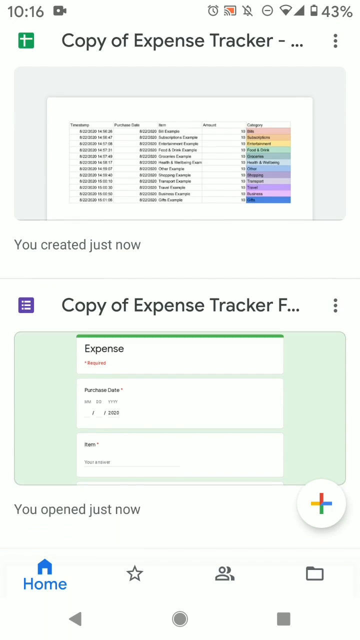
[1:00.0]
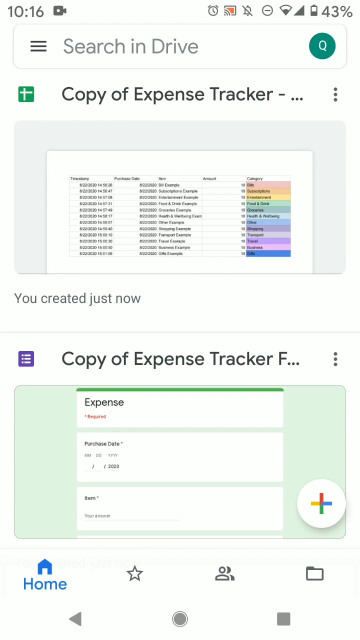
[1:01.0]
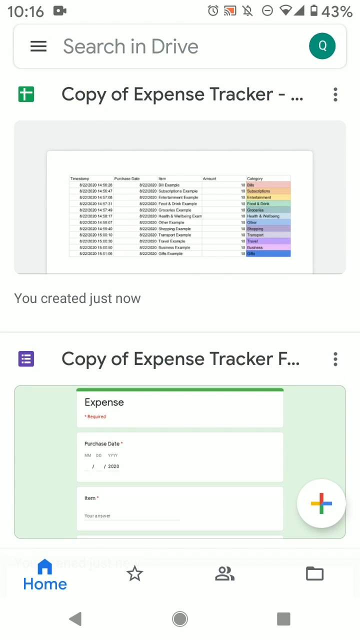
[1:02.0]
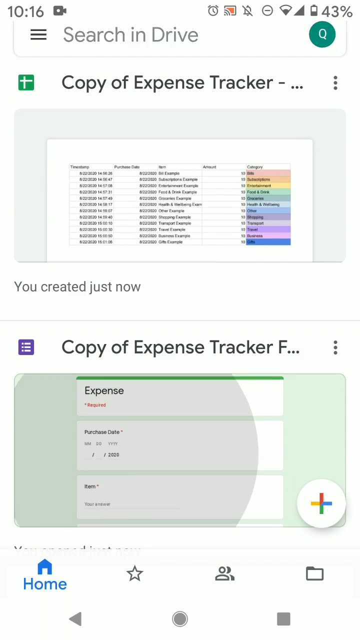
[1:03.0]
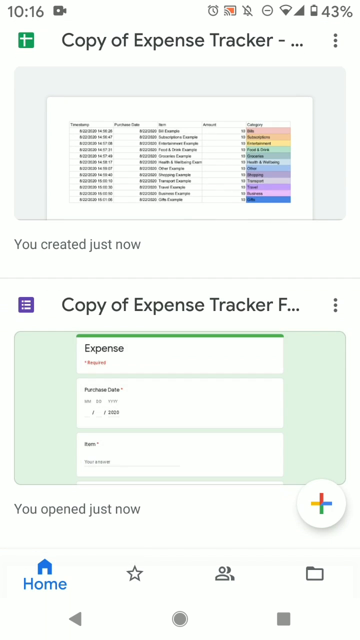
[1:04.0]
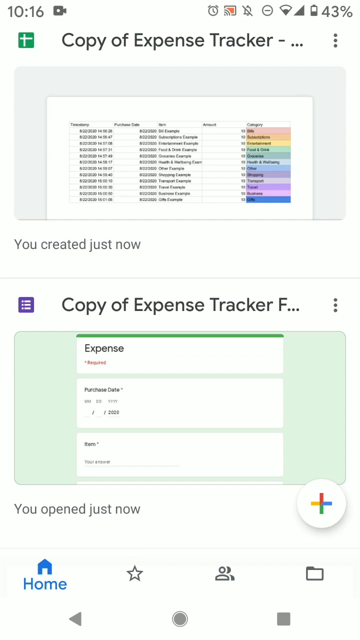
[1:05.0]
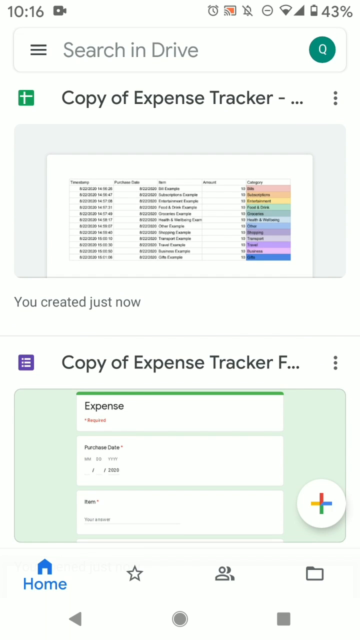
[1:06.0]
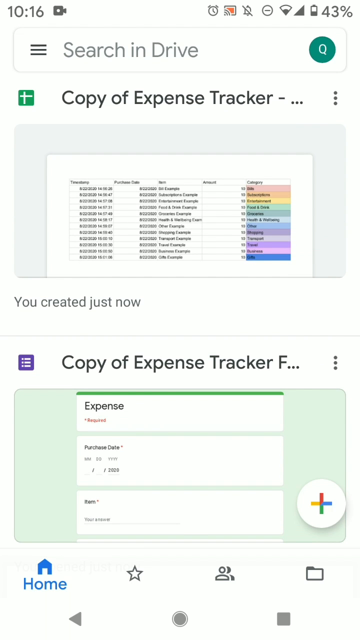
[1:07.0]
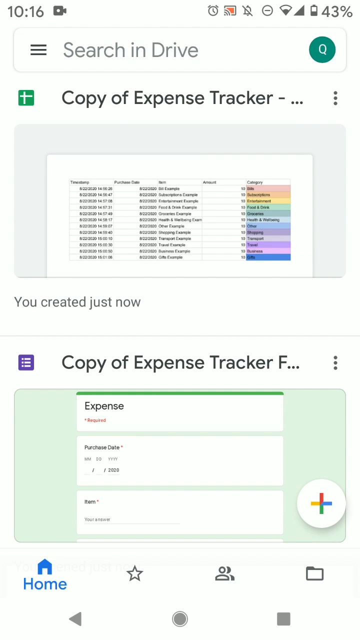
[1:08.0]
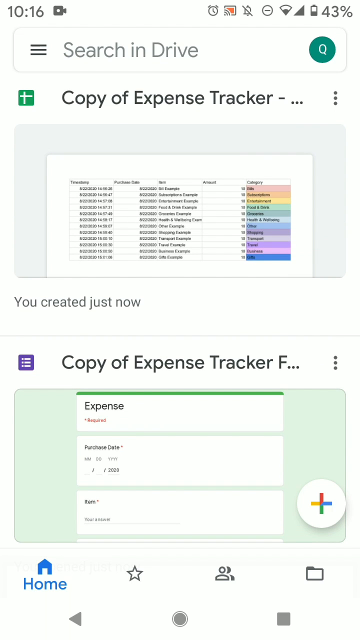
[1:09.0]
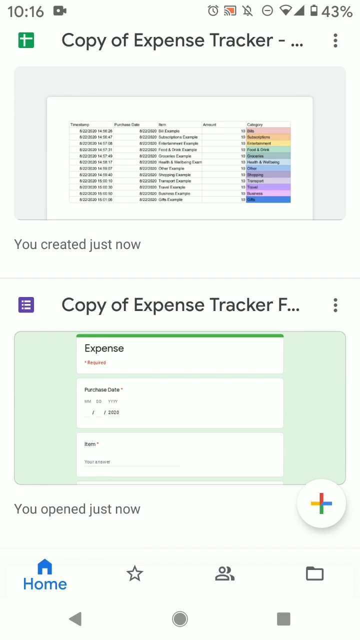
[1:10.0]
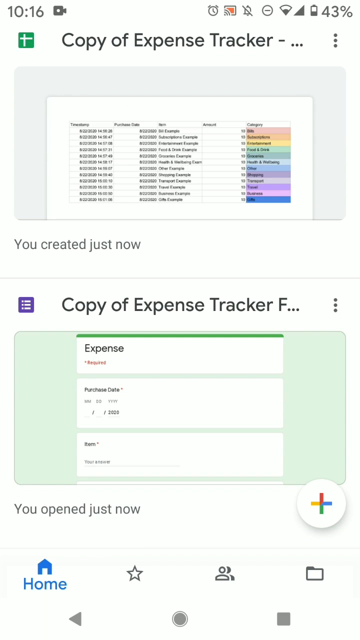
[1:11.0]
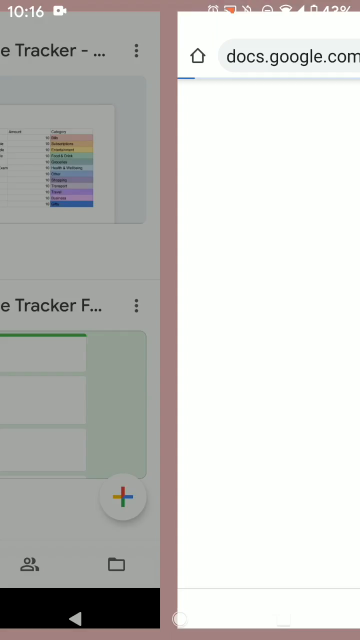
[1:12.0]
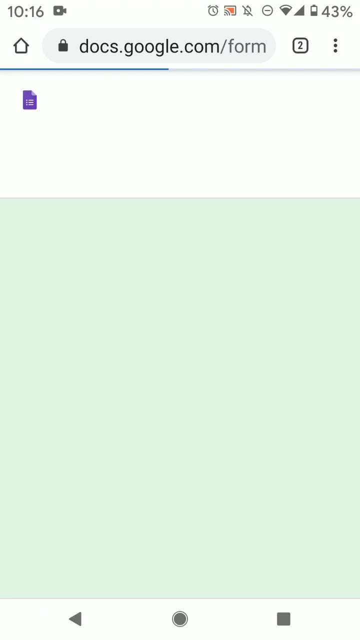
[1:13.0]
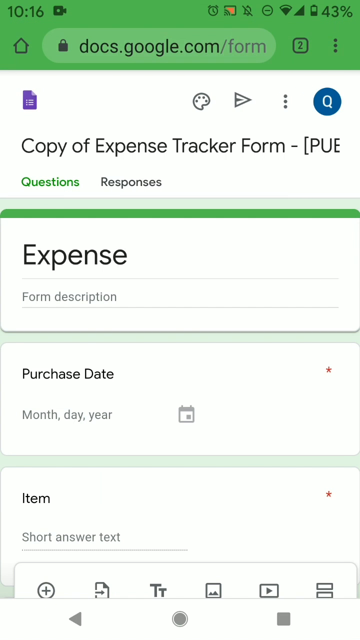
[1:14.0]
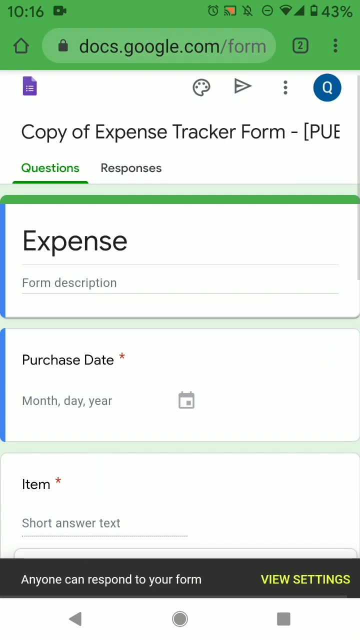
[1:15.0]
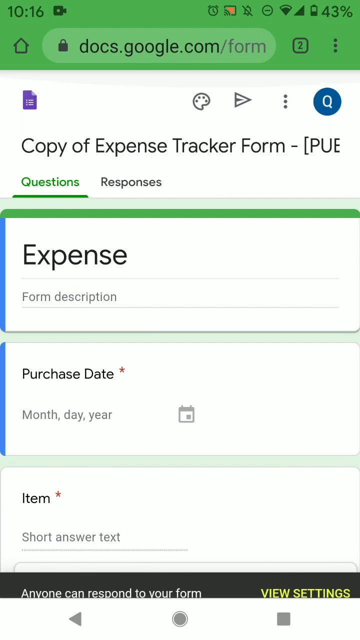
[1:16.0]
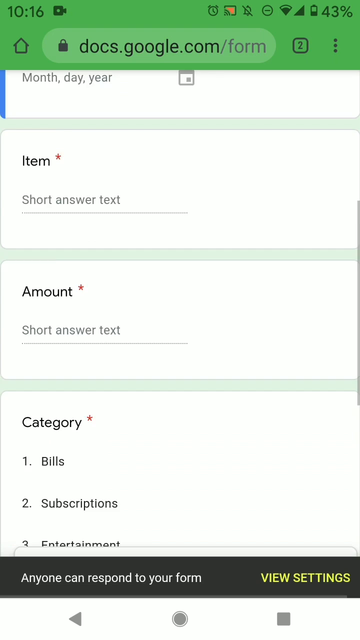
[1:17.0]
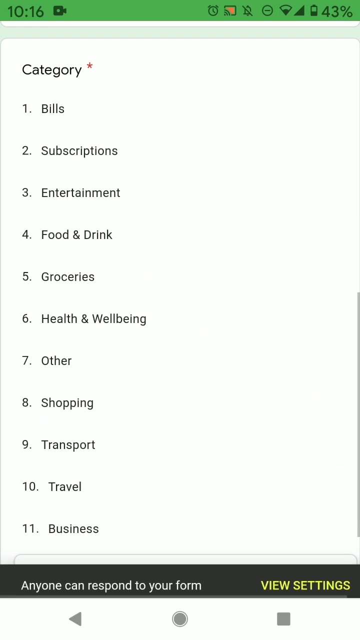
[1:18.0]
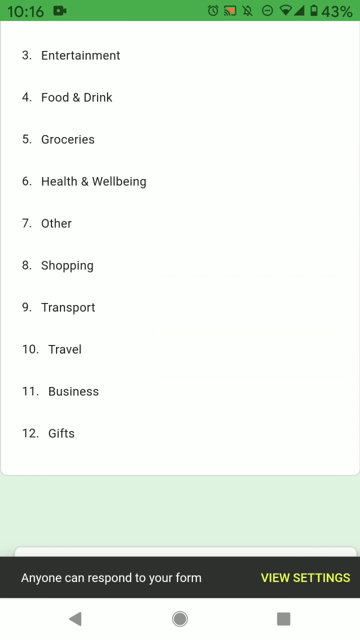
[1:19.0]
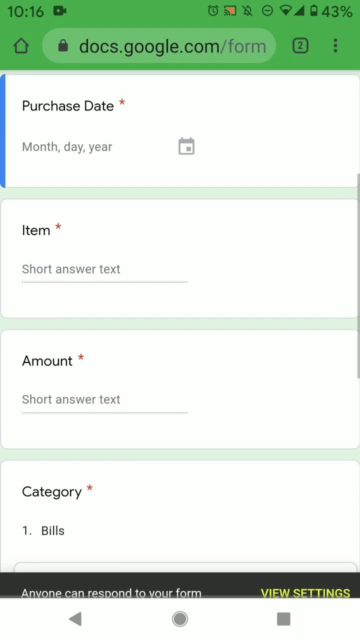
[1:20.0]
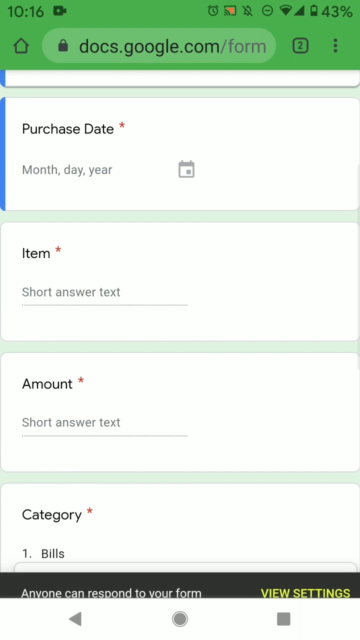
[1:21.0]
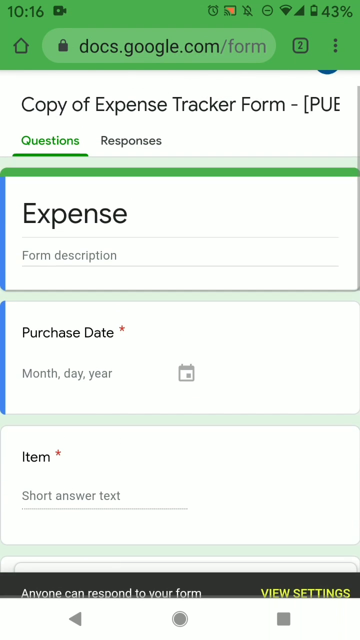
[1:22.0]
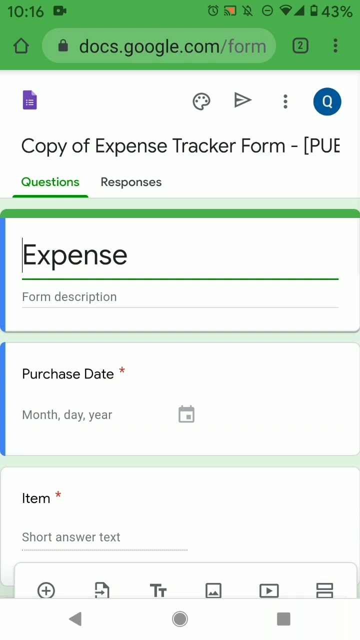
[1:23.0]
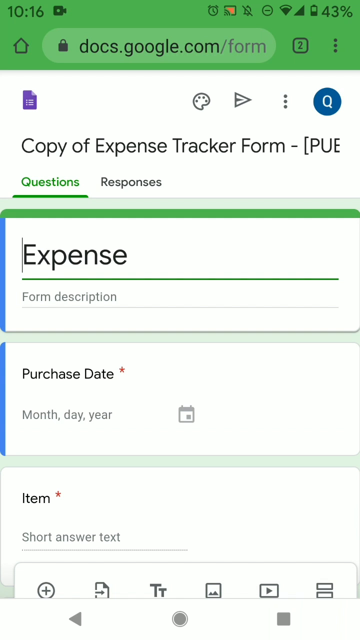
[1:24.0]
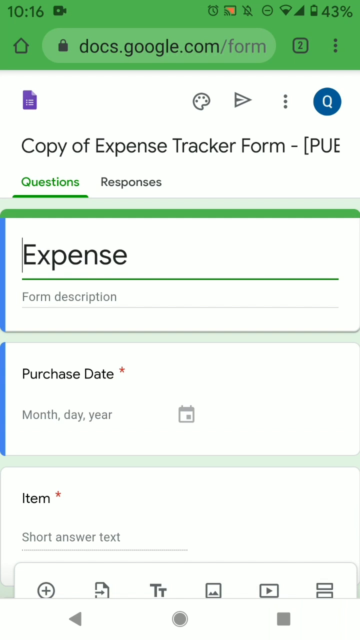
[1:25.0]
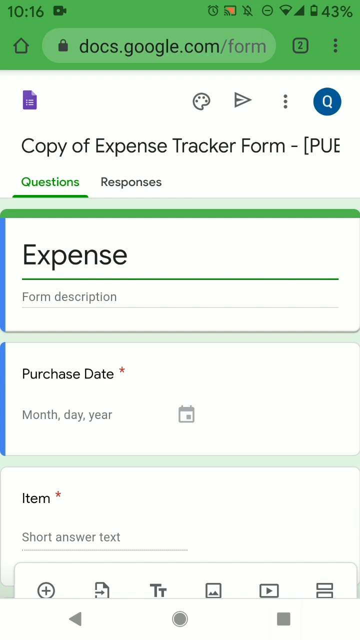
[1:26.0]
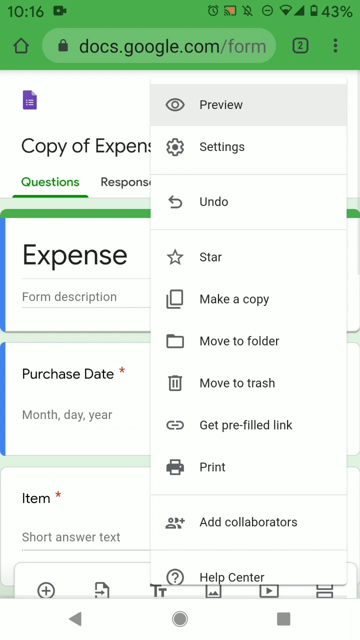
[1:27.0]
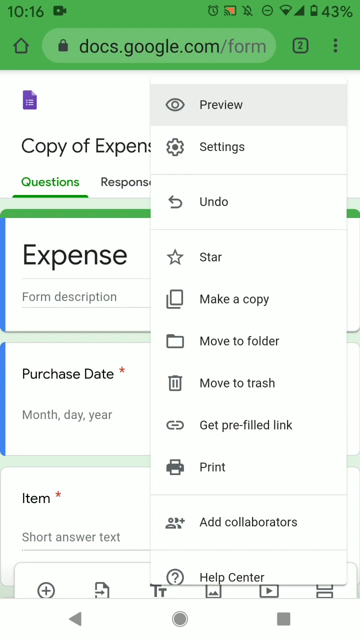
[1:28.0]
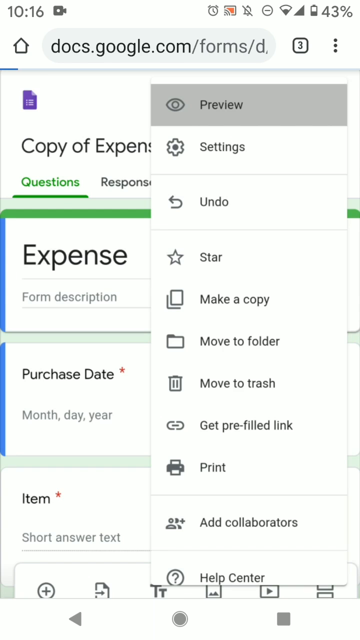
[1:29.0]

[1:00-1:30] What appear to be the copies of the expense tracker are shown, with two three-dot menus. What appears to be a sheet has text in multiple color-coded columns: pink, orange, yellow, green, blue, a lighter blue, a darker blue, a light purple, an even lighter purple, a darker and brighter purple, then pink and blue. The copy of the expense trackers appears as multiple squares, with home and star icons, and text says "you opened just now". The page scrolls back up and something is clicked; the copy of the expense tracker form expands, showing two buttons below, "questions" and "responses", with "questions" highlighted in green text. The form shows "expense form" and a form description, a purchase date field with month, day, year and a calendar icon, an items field and multiple icons. "View settings" appears in yellow. Categories are listed: bills, subscriptions, entertainment, food and drink, groceries, health and wellness, other, shopping, transport, travel, business and gifts. The page scrolls.